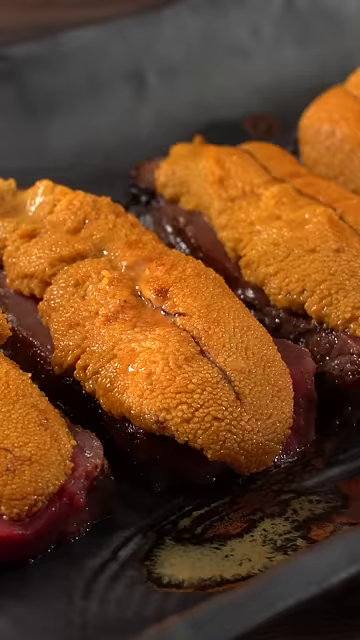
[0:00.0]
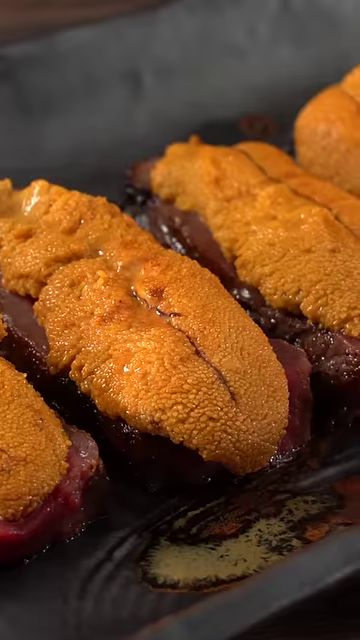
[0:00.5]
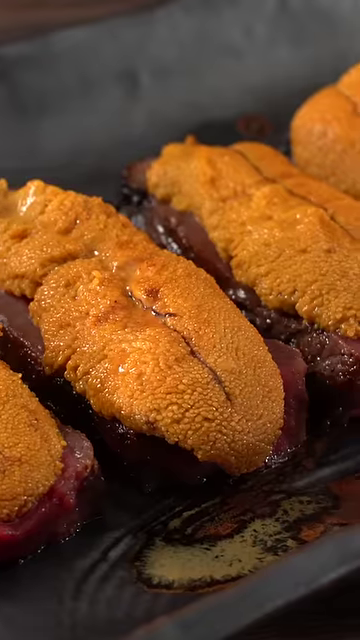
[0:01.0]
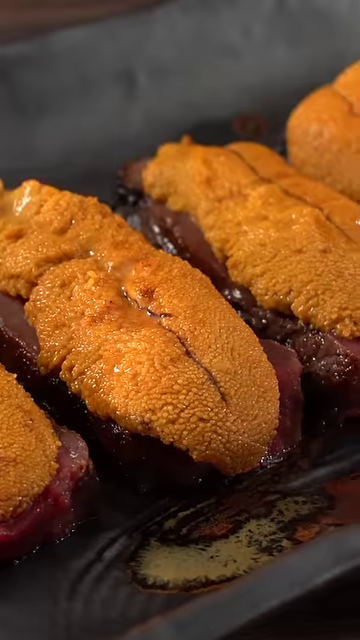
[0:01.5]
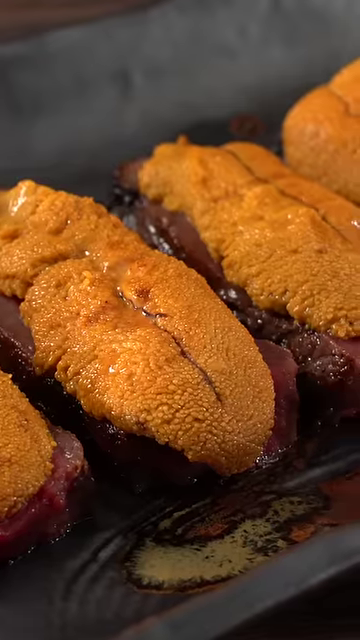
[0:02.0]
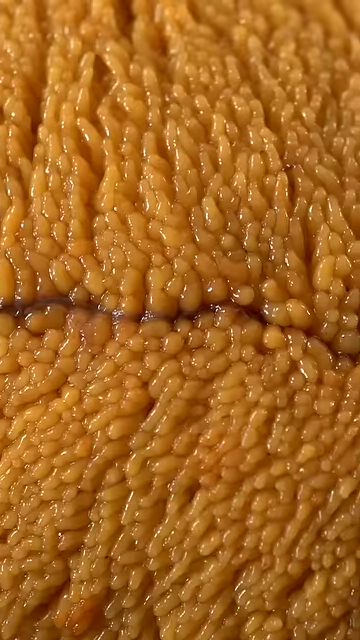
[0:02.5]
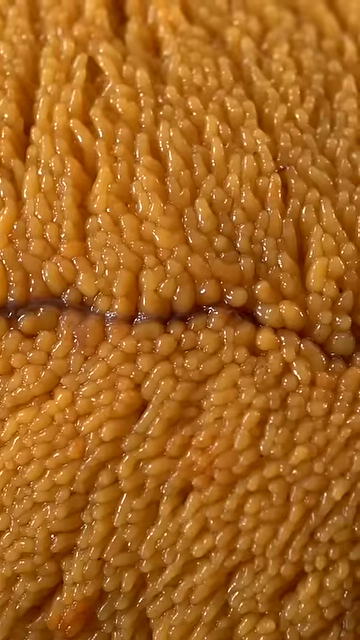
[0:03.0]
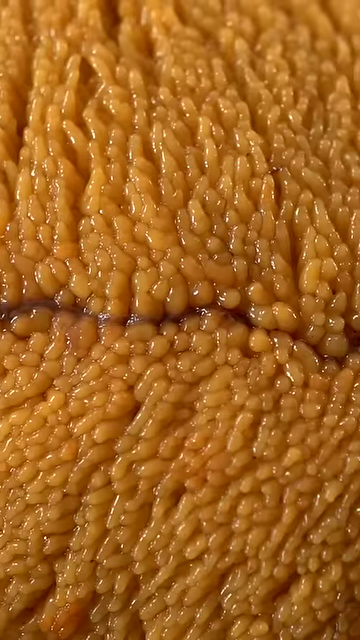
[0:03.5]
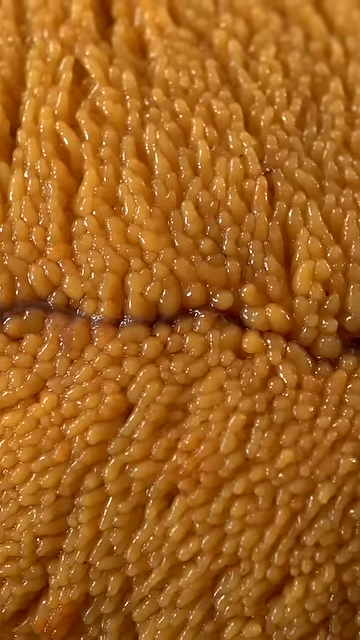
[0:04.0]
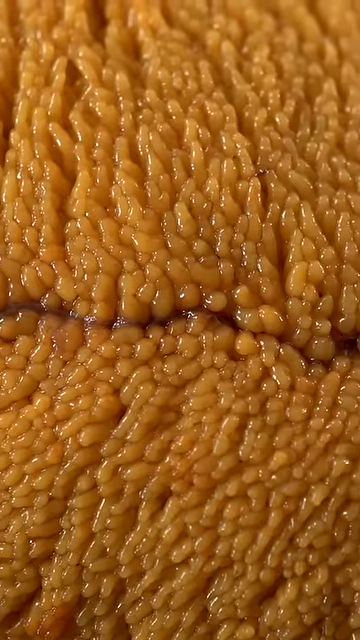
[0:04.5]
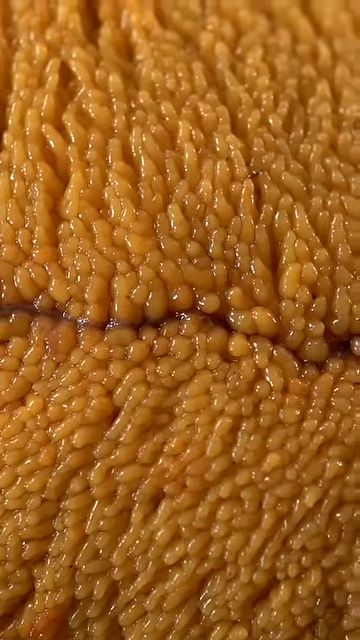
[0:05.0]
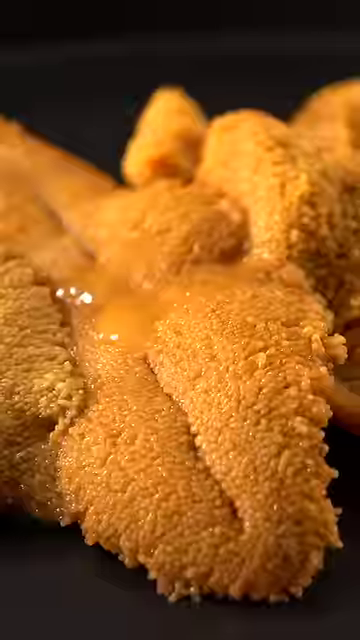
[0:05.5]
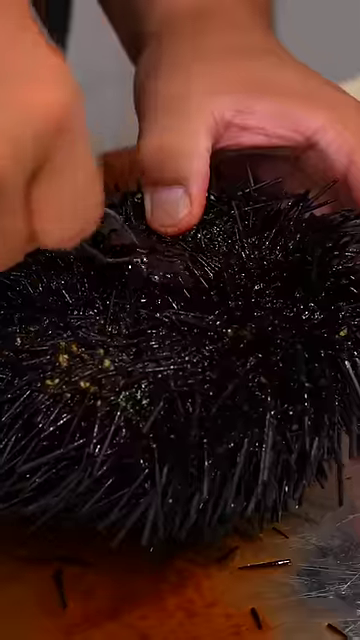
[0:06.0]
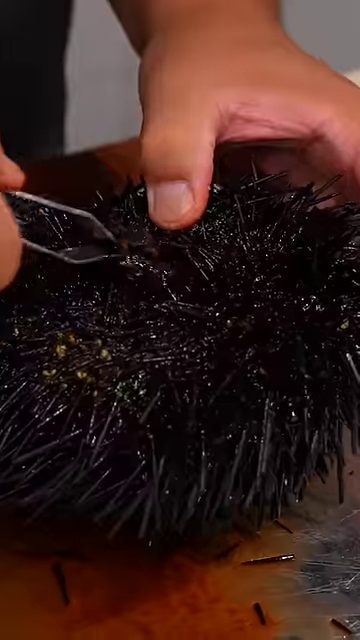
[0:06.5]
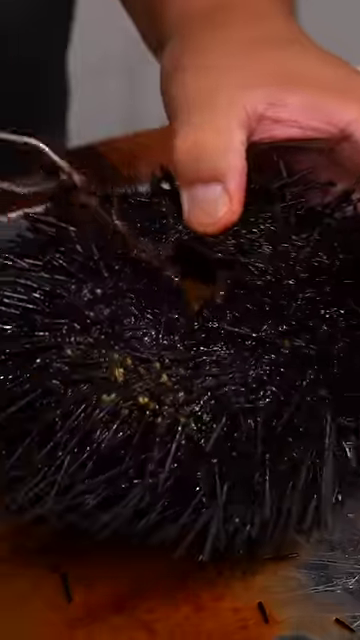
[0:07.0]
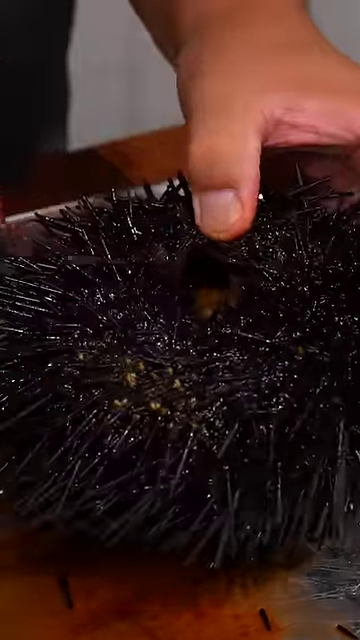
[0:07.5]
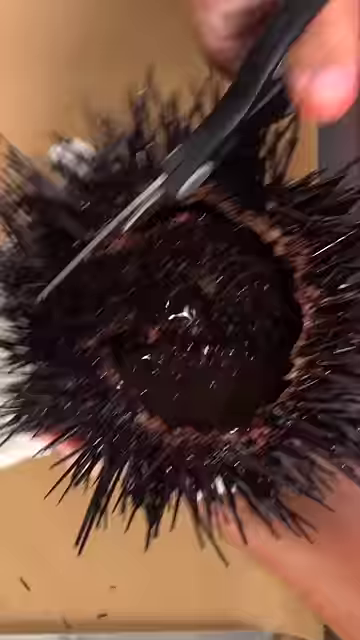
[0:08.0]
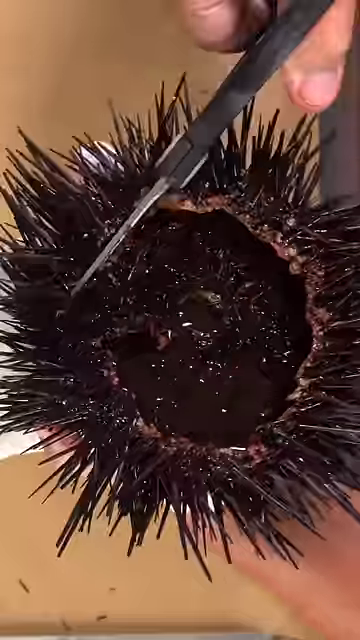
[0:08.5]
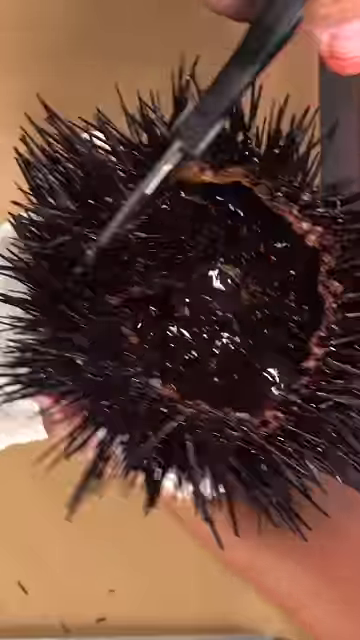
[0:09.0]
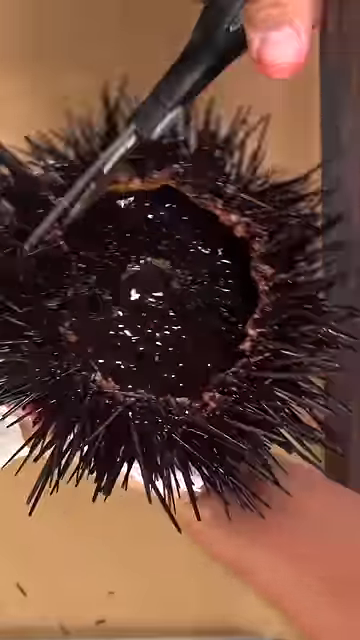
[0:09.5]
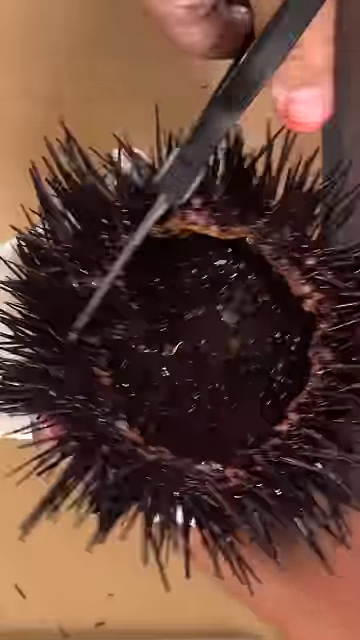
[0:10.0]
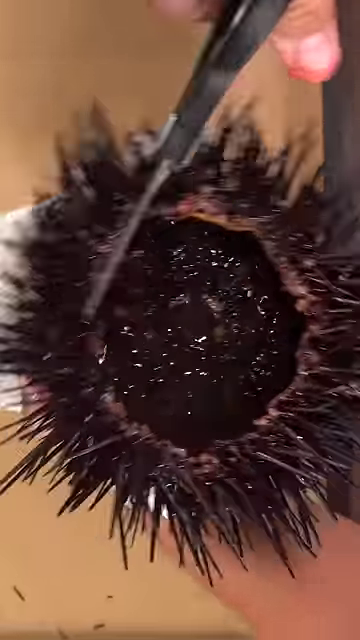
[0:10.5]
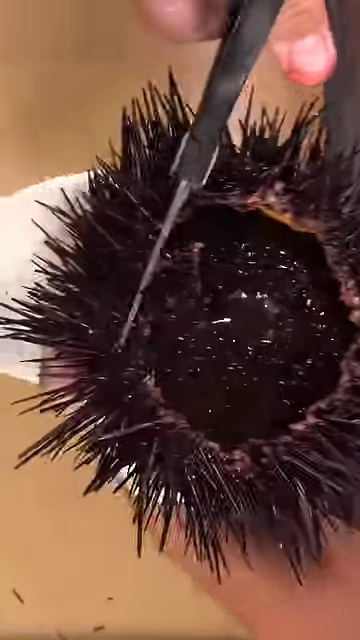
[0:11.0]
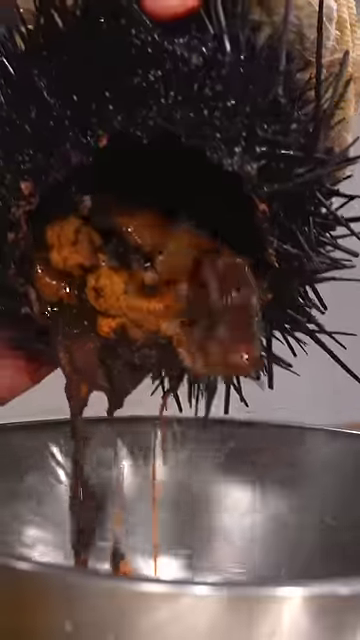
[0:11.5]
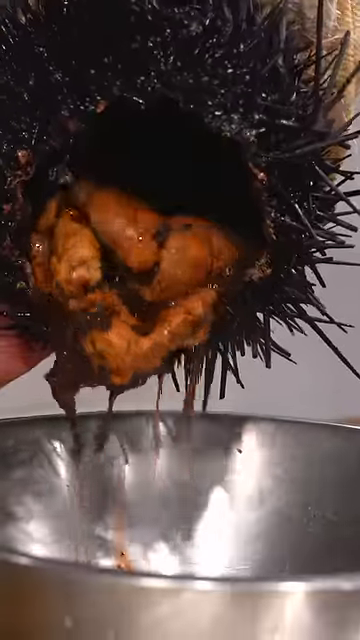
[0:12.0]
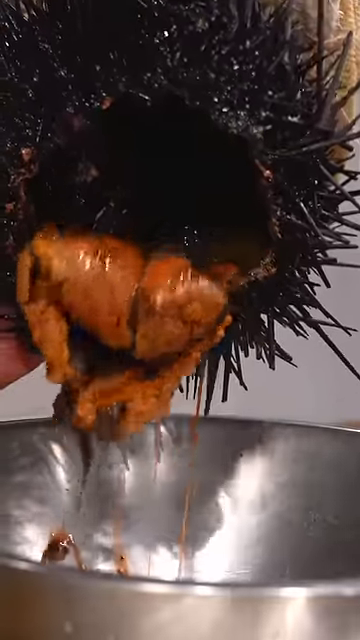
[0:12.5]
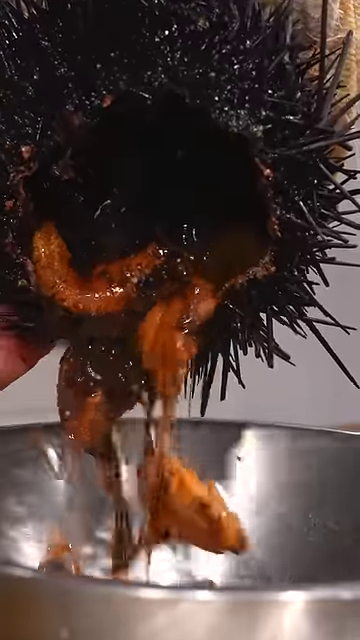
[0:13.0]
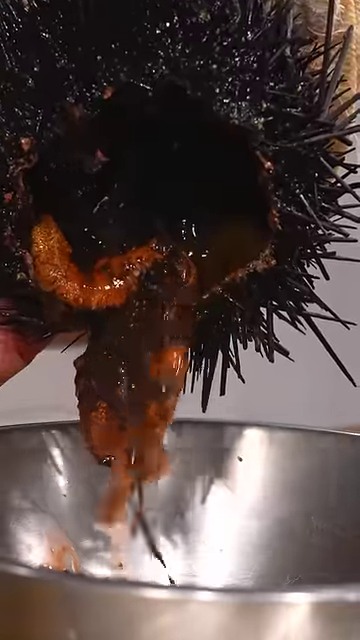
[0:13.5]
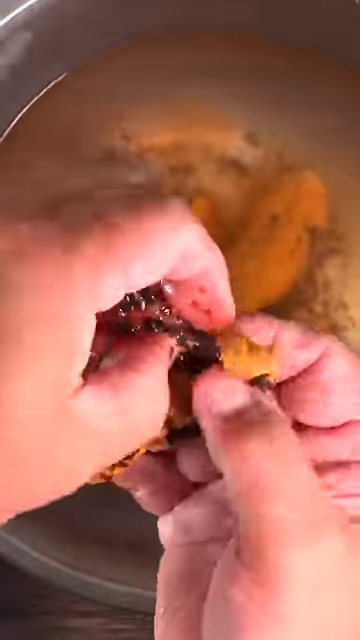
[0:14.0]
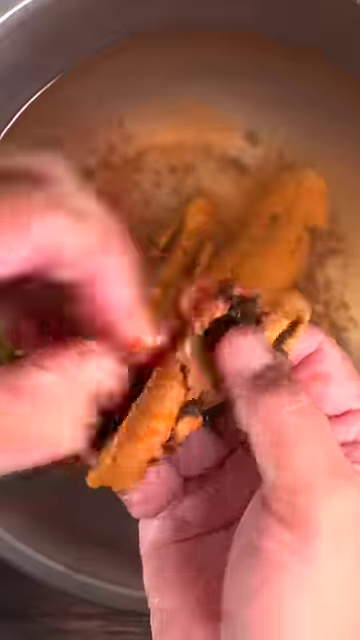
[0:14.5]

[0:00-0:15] A yellowish substance is shown, seemingly emanating from the center of a sort of oval shape, and this is repeated: there are multiple oval shapes at the start. The interior of each oval is a light yellow color, while the outside of the round oval thing is grayish brown. A close-up then shows the middle of the yellow substance, which is almost granular and looks like a wet terry cloth towel. A darkened, irregular line runs through the center of the yellow substance. After a close-up of that line, the camera pans back to a further-away viewpoint. Next, someone's left hand holds an almost bristle-like, haired, dark gray, roundish item. The person cuts away at the center of the item with what looks like short, black-handled scissors, trimming away some of the hairy item and then opening its center. The item with the prickly part is held up and inverted over a silver, metallic-looking bowl, and the yellow object from its center is dumped into the bowl. Some brownish gray substance clinging to the yellow is scooped away by someone's hand.